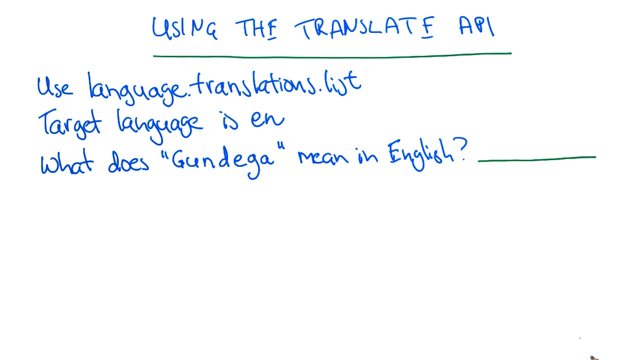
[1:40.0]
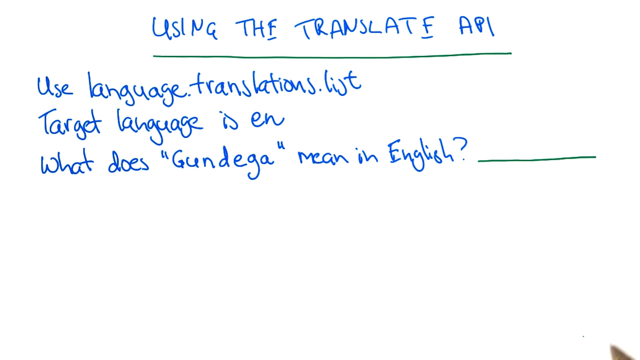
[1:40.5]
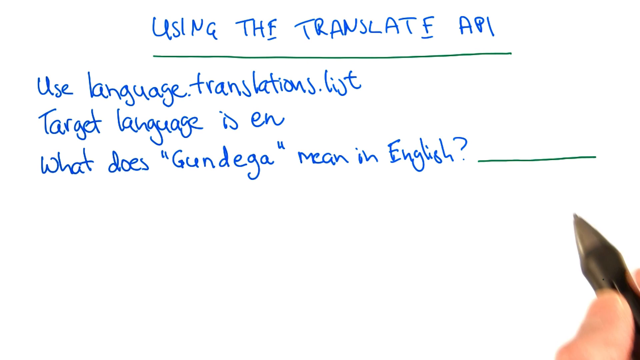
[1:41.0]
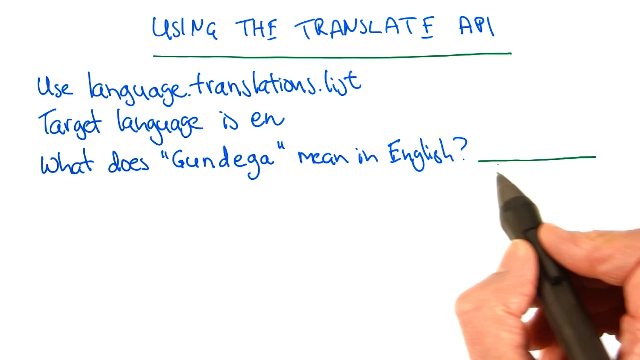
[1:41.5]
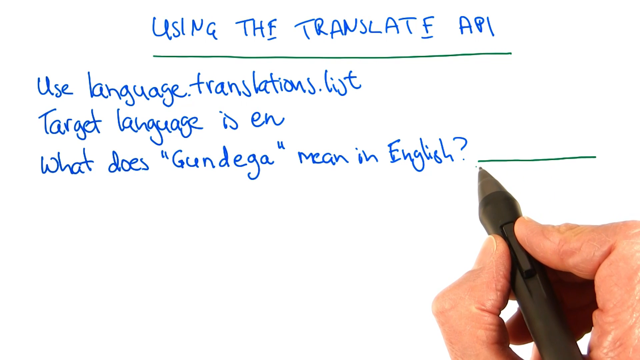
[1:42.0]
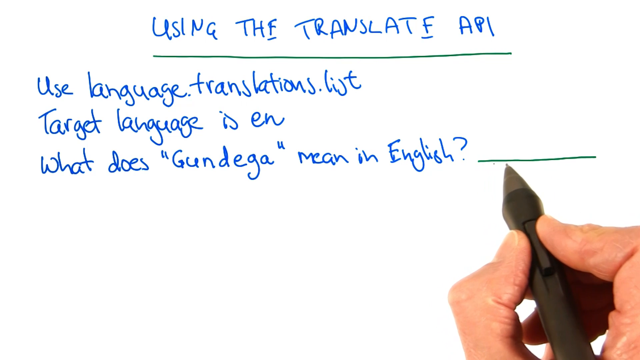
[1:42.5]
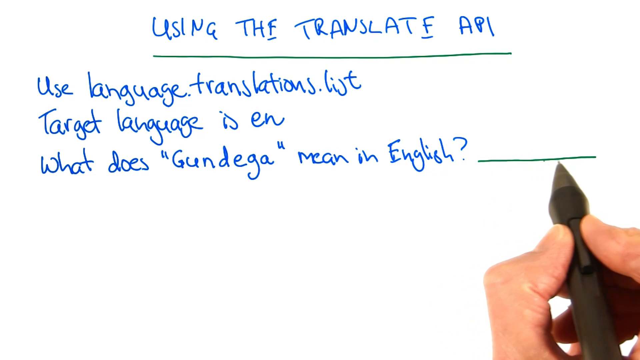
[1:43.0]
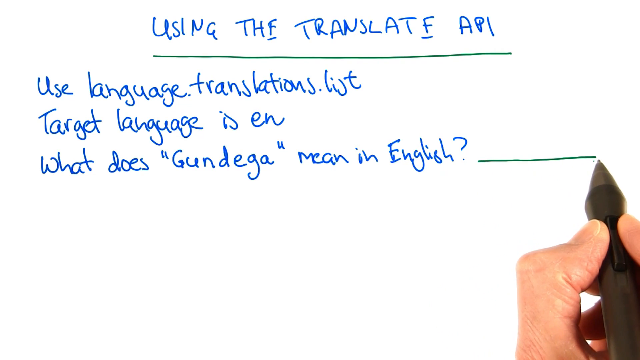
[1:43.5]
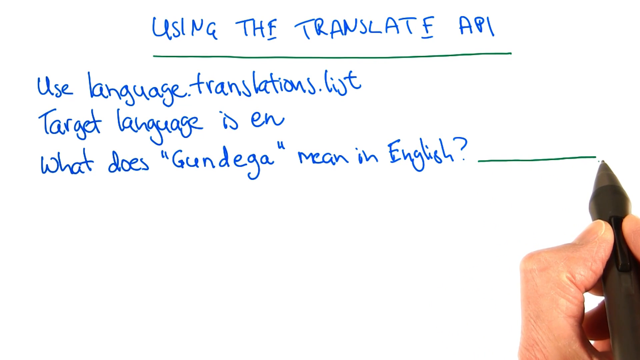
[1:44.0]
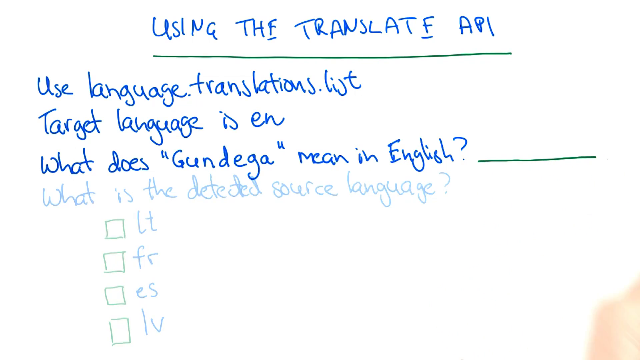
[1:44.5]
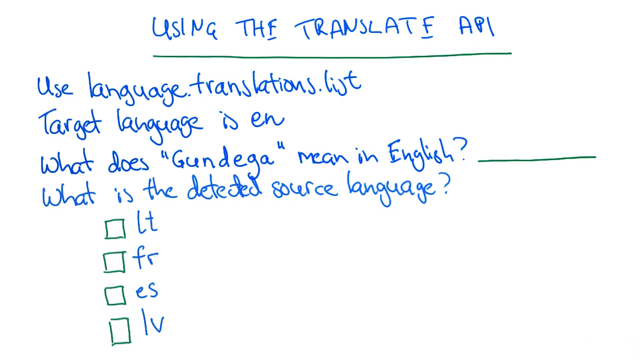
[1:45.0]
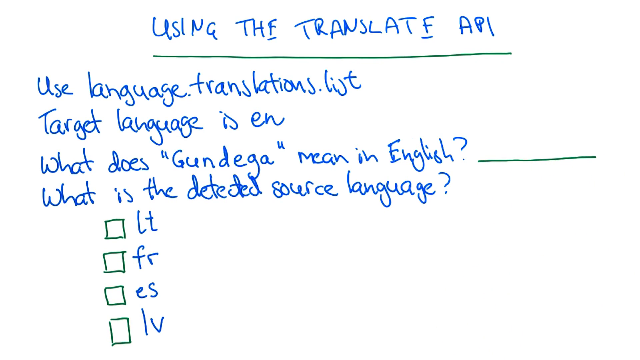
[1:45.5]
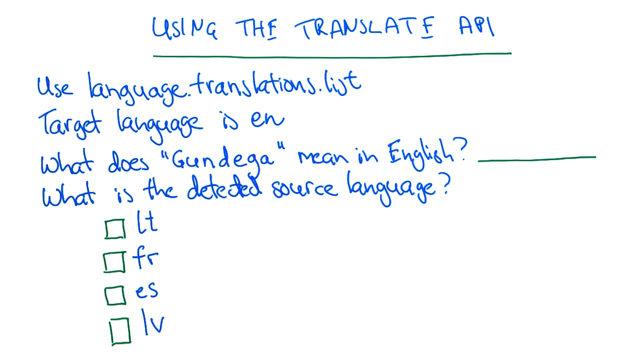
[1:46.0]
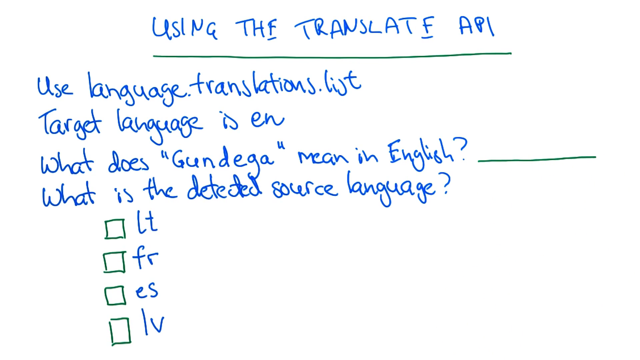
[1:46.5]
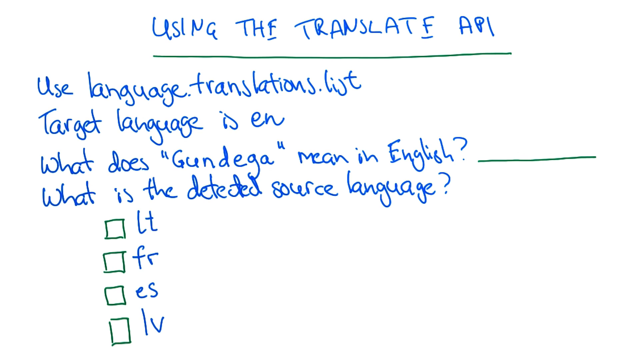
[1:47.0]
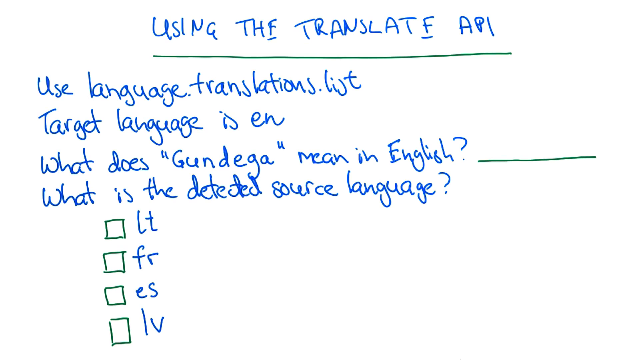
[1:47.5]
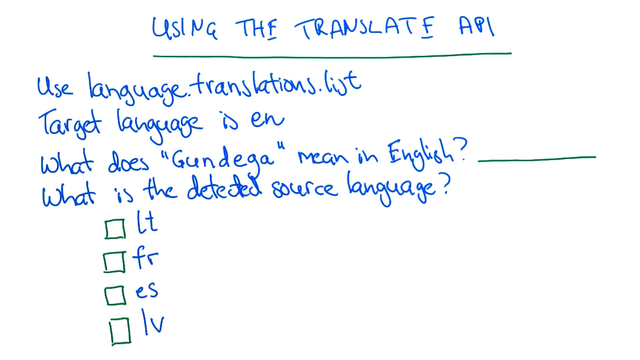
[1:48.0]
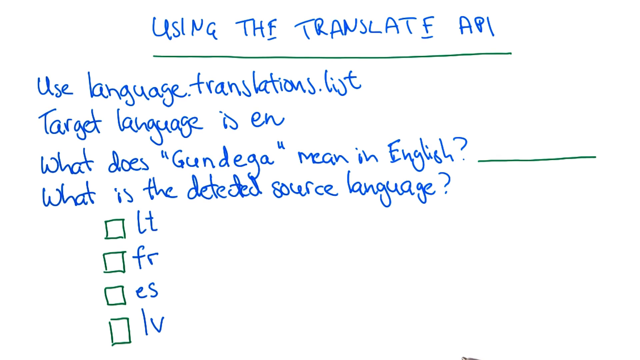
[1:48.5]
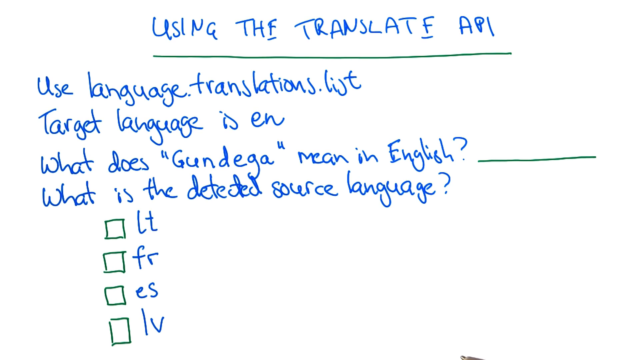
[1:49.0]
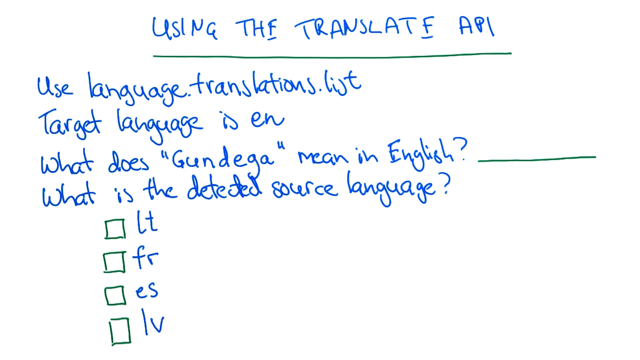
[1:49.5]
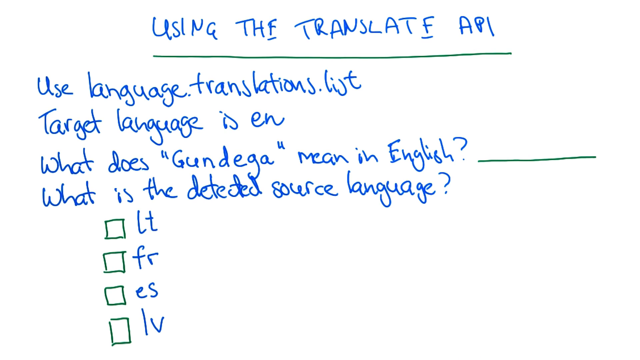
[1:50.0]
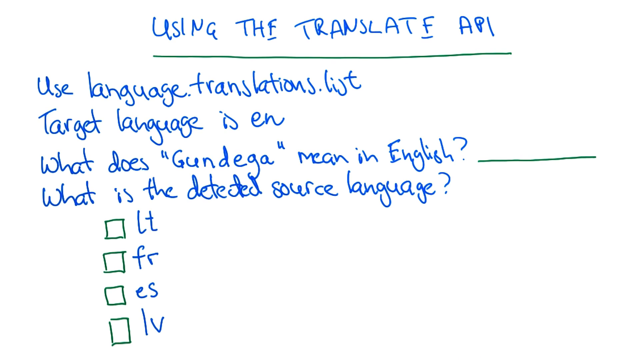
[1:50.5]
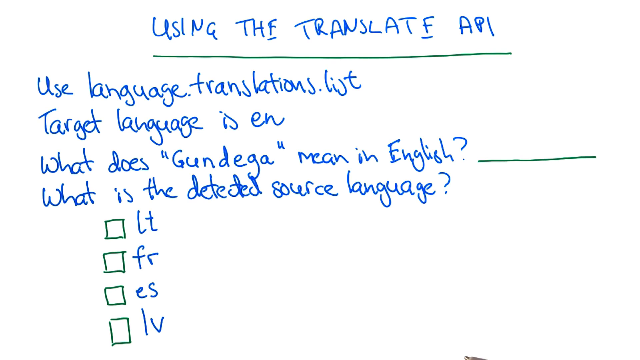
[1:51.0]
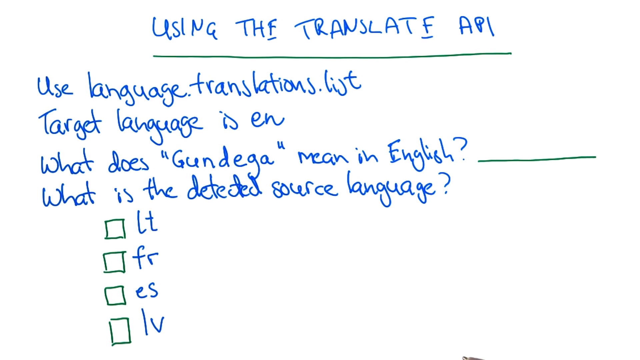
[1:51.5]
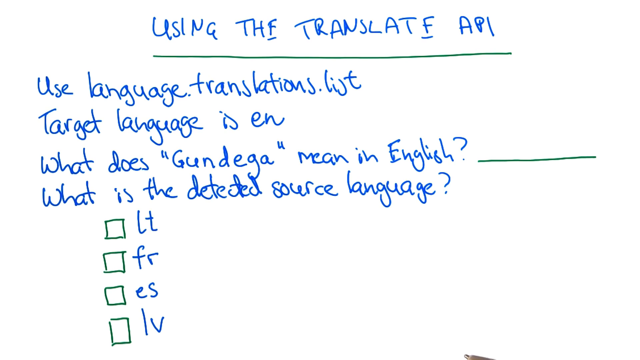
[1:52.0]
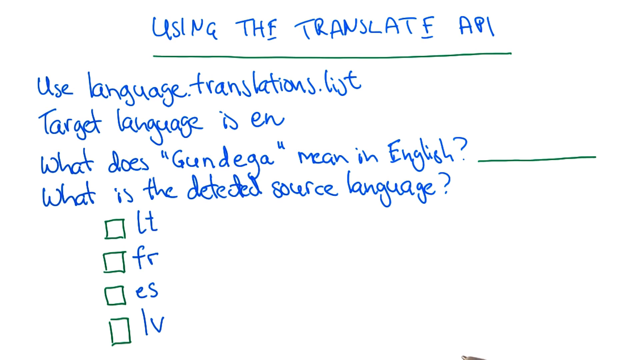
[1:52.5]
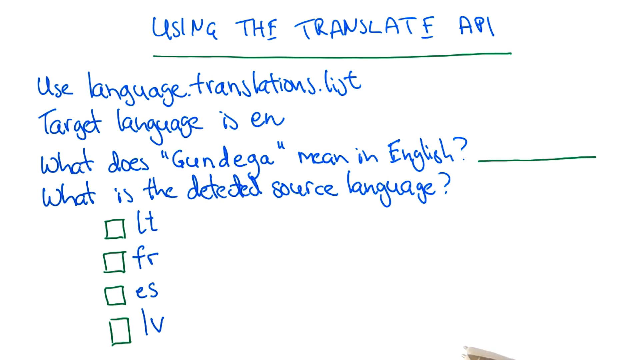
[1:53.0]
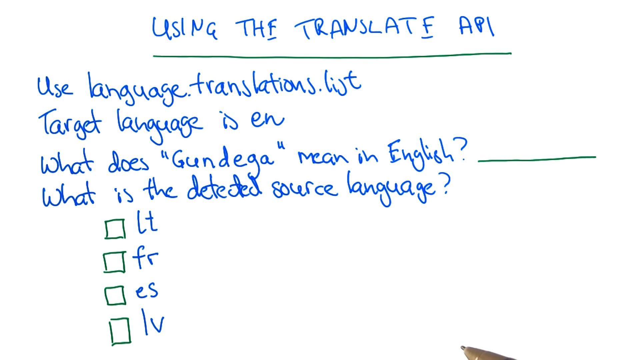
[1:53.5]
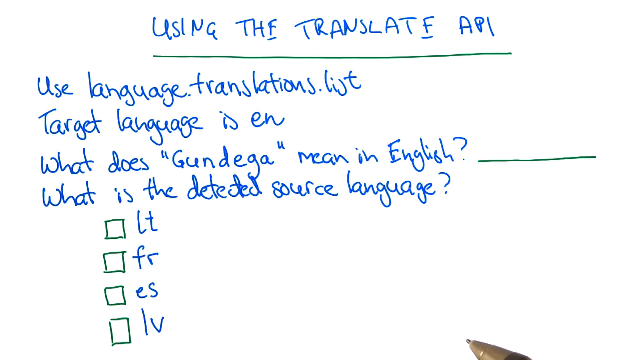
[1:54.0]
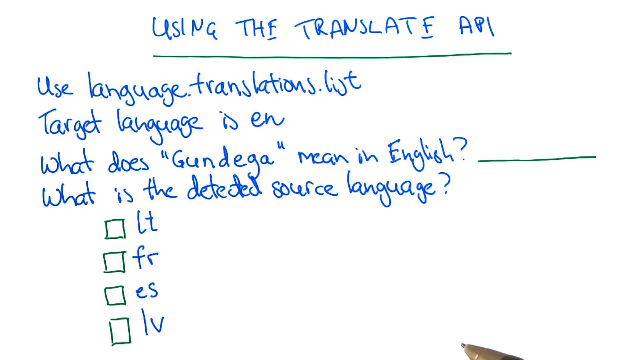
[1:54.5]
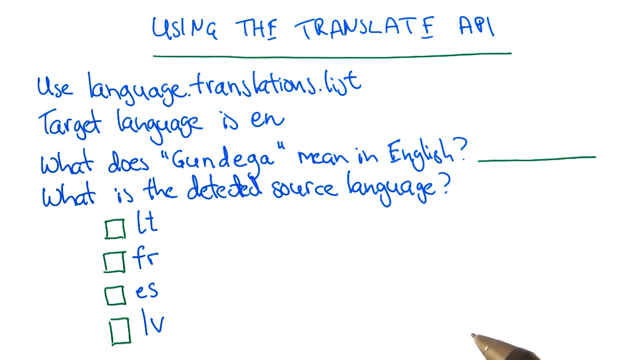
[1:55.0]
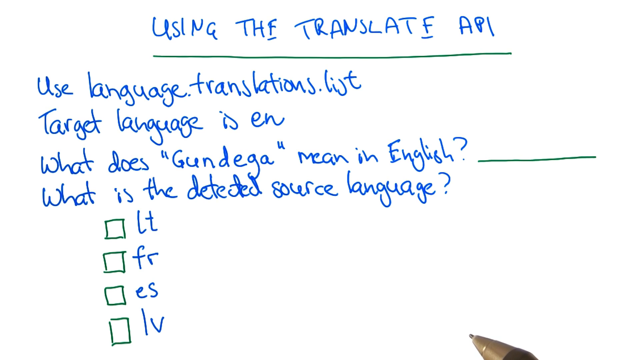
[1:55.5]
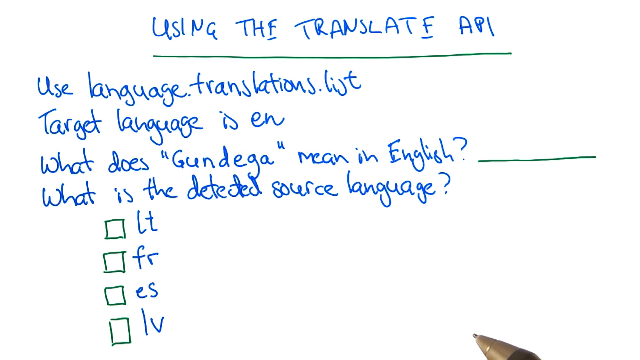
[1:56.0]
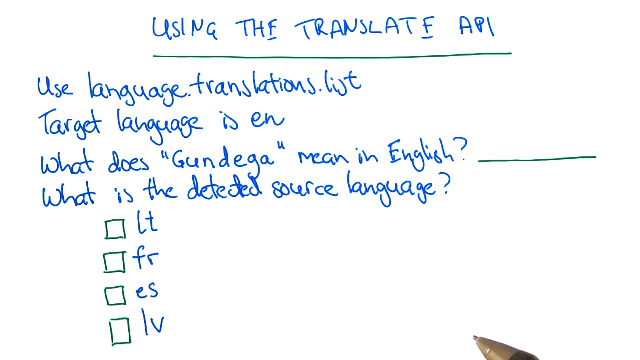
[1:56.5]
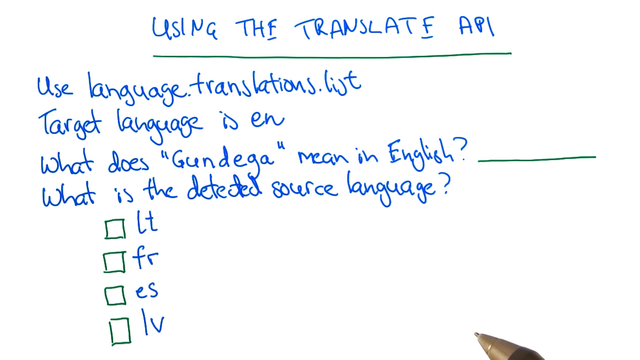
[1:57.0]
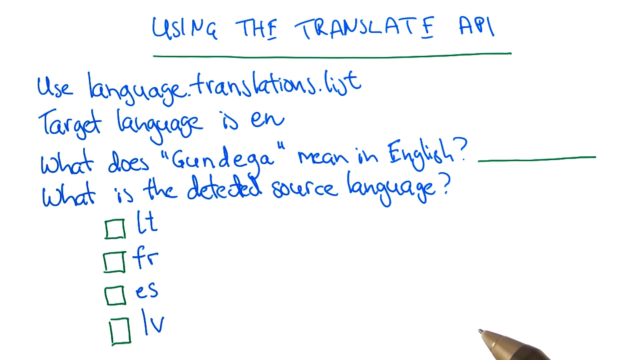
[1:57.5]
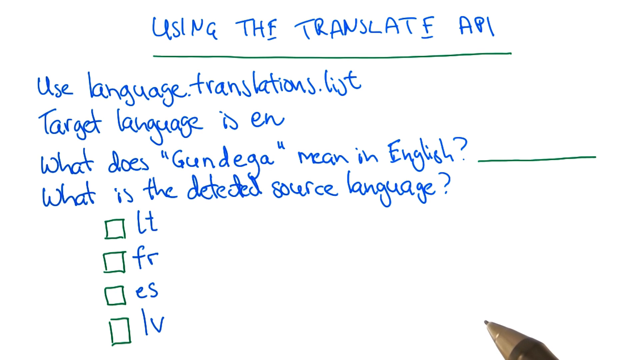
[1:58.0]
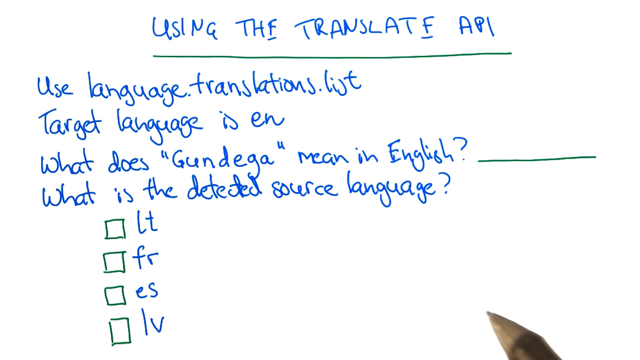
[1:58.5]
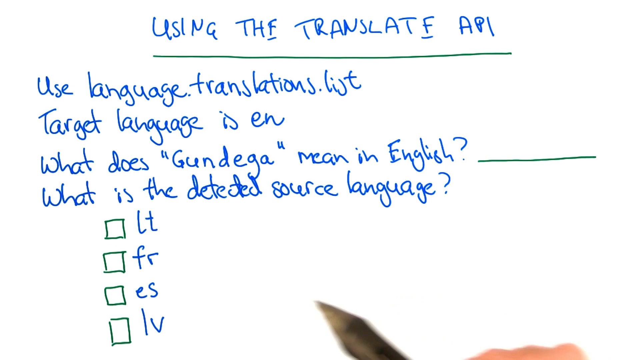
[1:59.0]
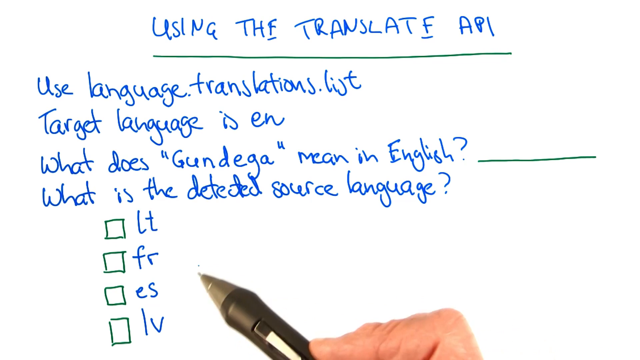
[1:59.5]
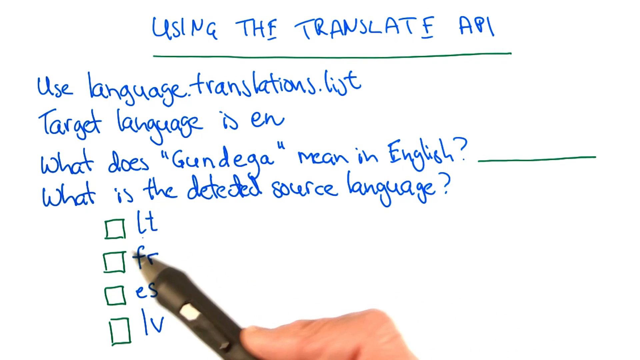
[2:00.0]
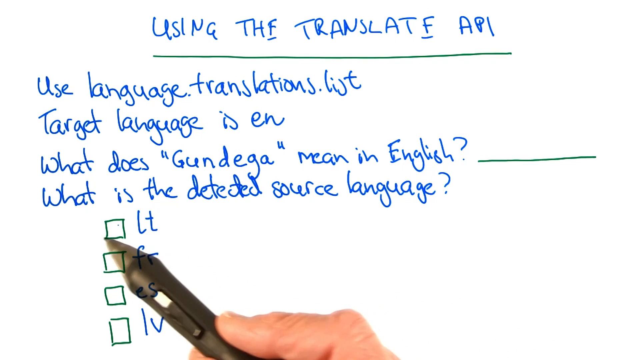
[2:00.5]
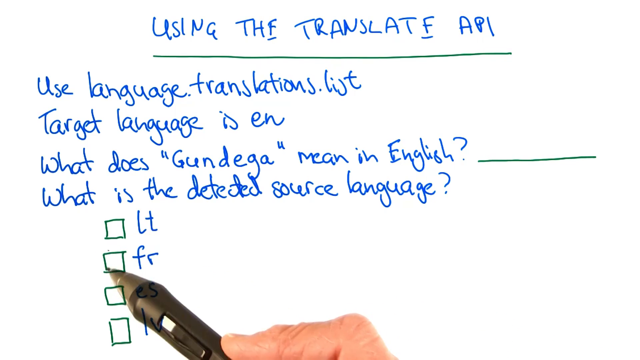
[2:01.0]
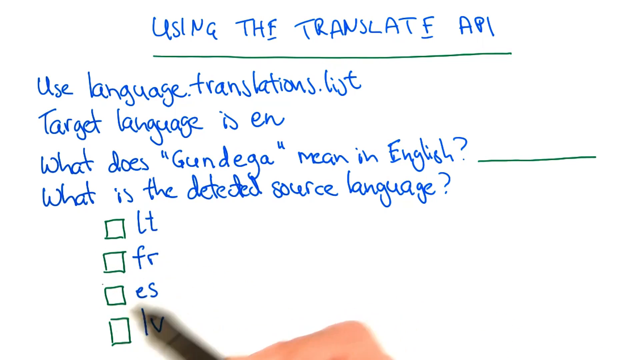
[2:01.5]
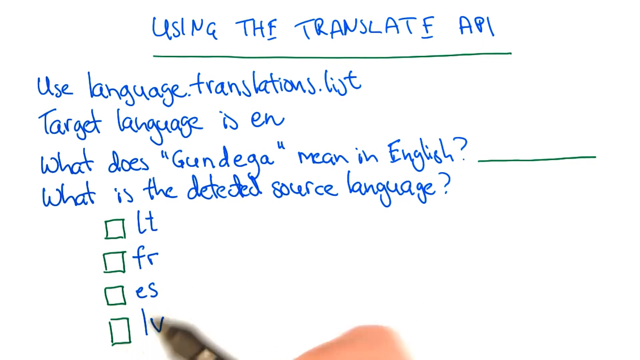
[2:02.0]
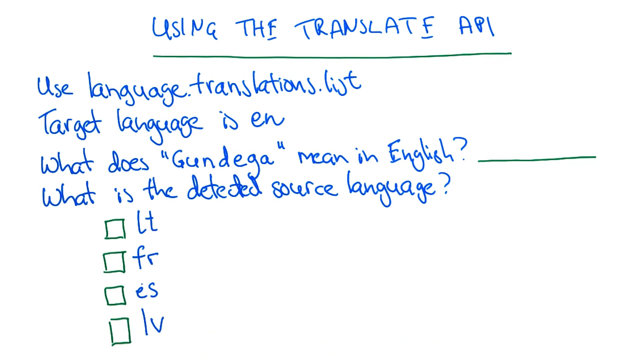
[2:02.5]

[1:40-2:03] A whiteboard screen shows a title in capitals, in human writing, reading "Using the Translate API", and a green dash appears below it. Three items are written below: "Use language.translations.list", "Target language is en" and "What does gundega mean in English?", with a green dash next to the question, as if space has been left to answer it. A human hand appears holding a pen-like object, its tip hovering over the green space for answering the last question, and highlights it. Below that, more text appears asking "what is the detected source language?", and four options are shown with green check boxes next to them: LT, FR, ES and LV. The pen hovers over each of the options as if discussing them.